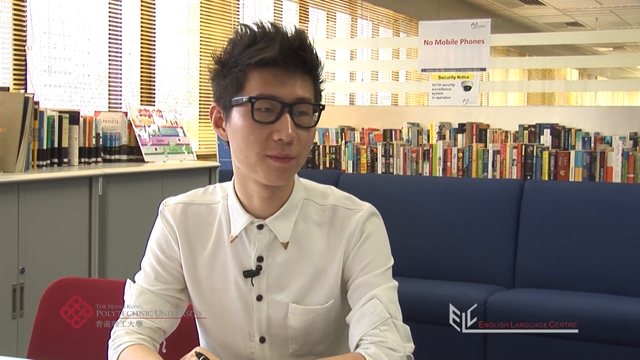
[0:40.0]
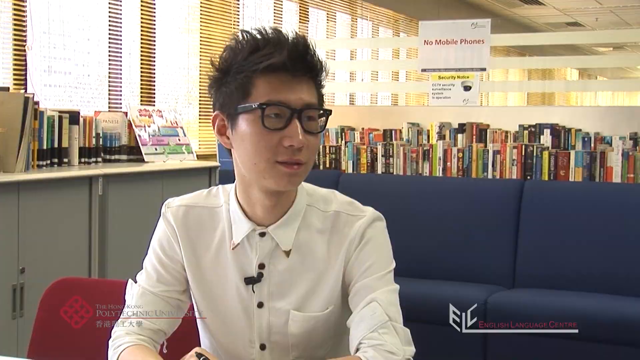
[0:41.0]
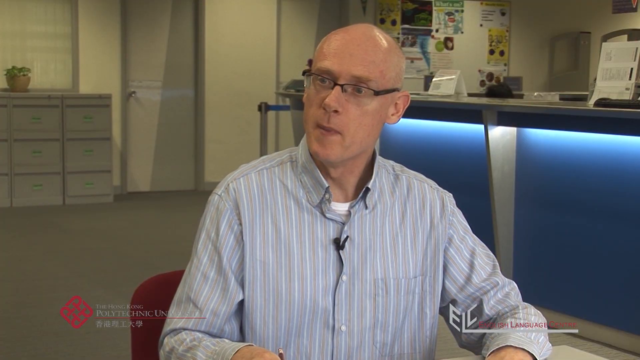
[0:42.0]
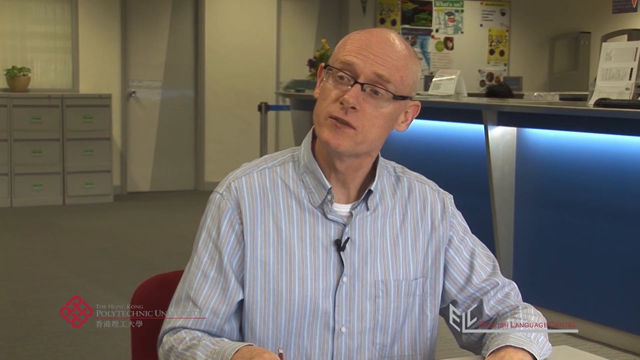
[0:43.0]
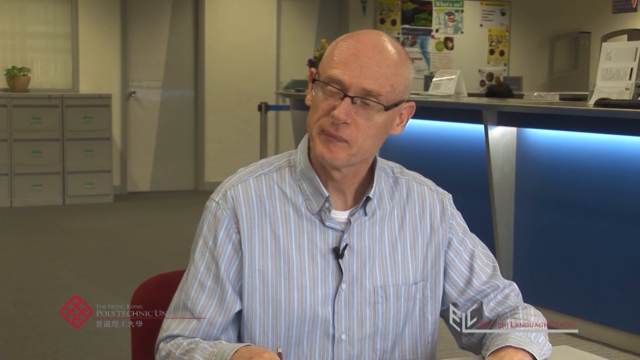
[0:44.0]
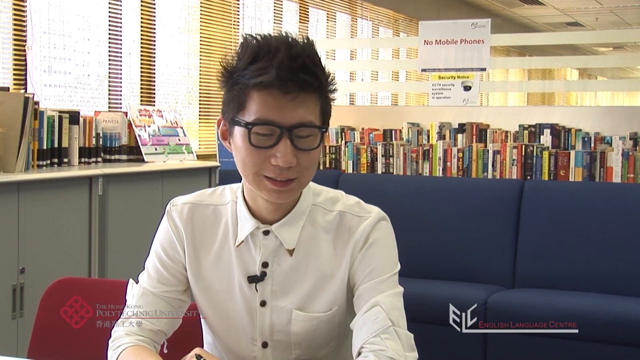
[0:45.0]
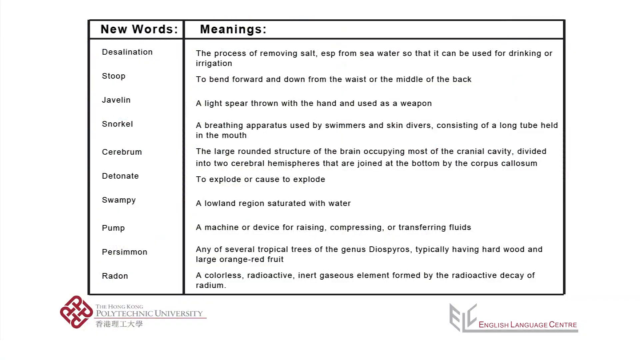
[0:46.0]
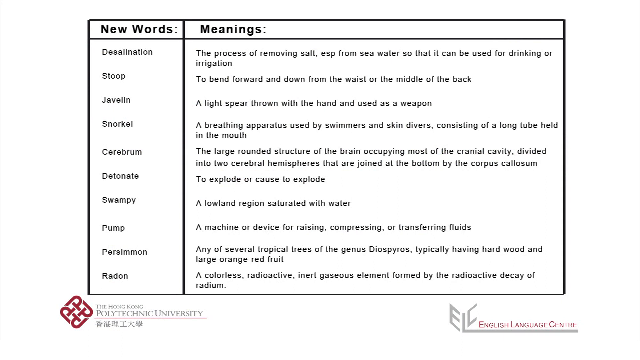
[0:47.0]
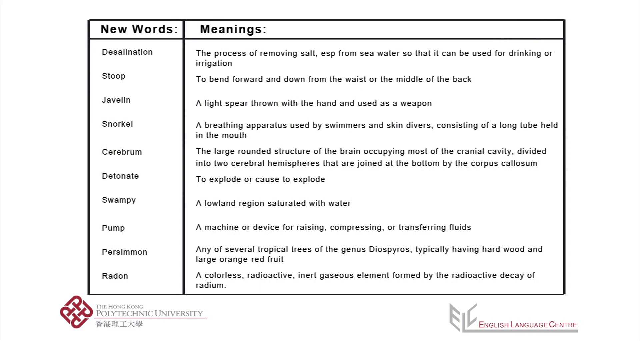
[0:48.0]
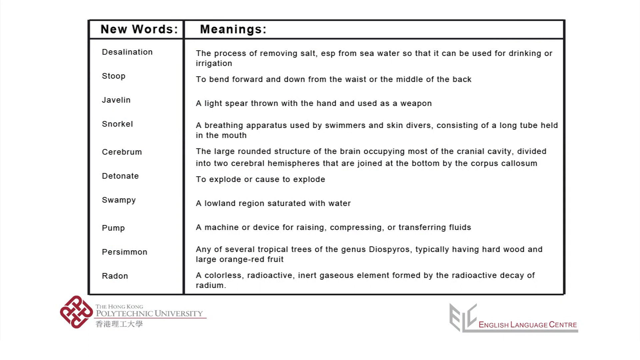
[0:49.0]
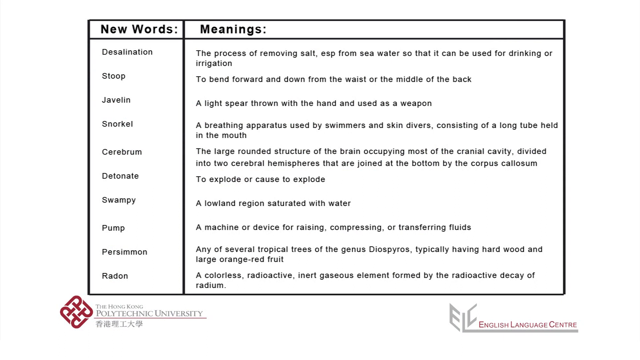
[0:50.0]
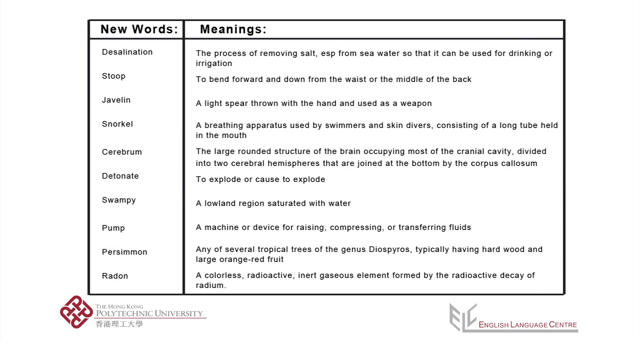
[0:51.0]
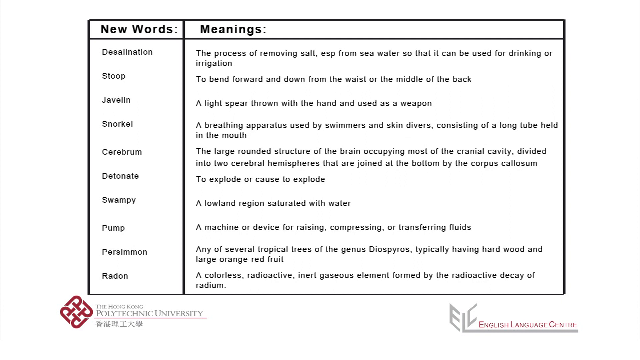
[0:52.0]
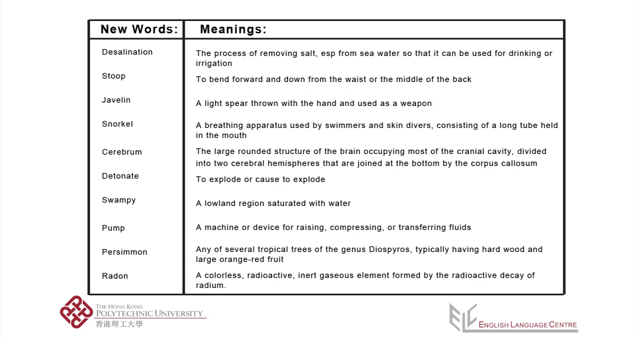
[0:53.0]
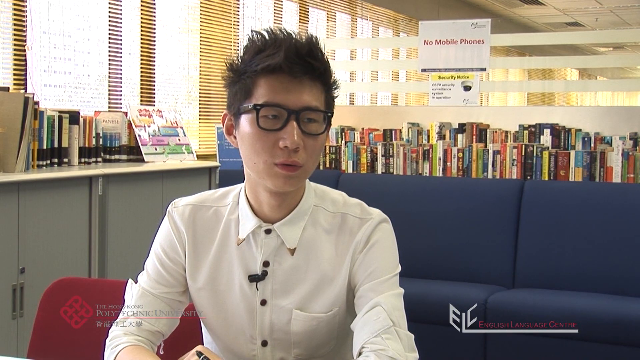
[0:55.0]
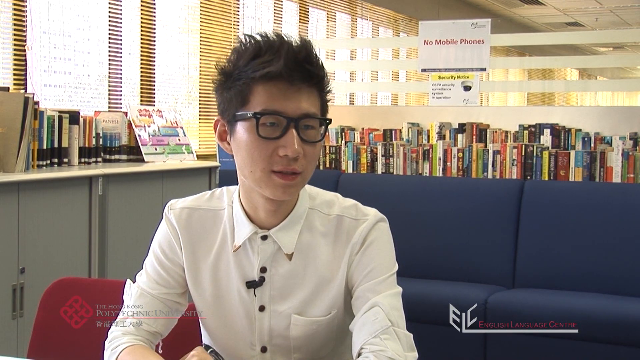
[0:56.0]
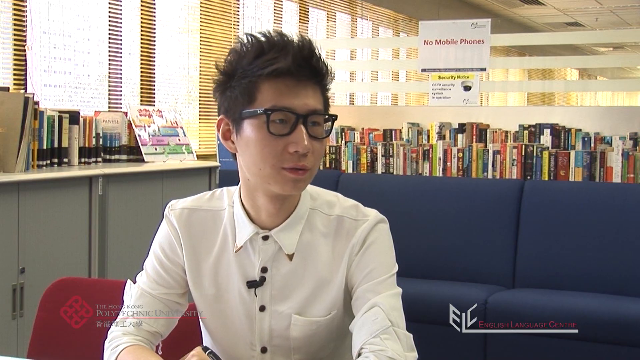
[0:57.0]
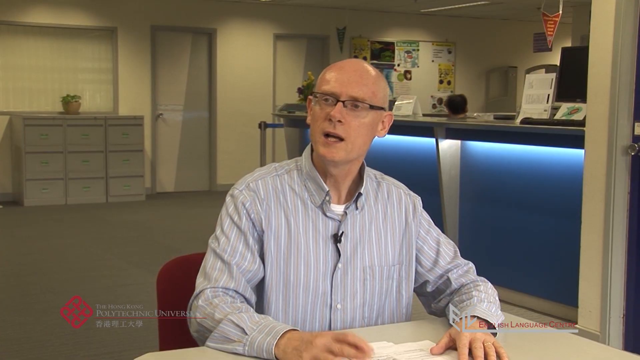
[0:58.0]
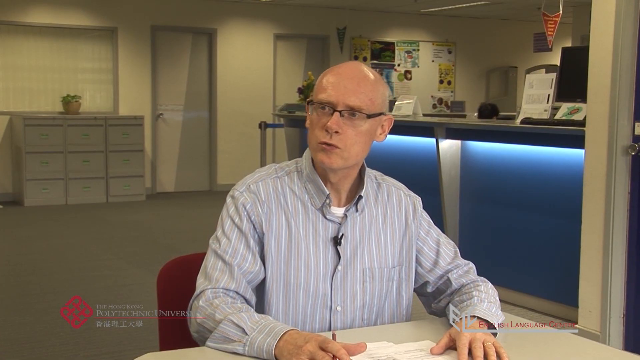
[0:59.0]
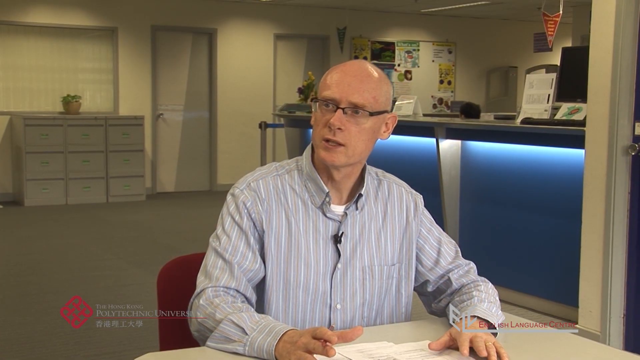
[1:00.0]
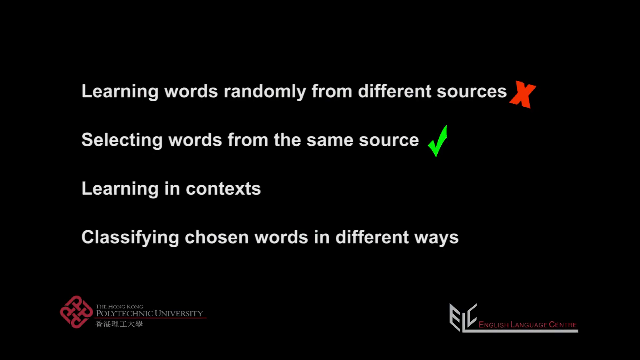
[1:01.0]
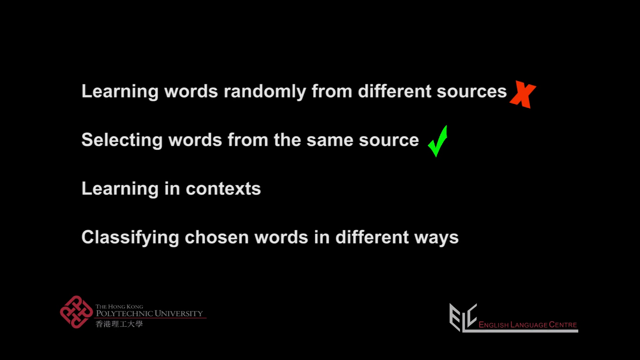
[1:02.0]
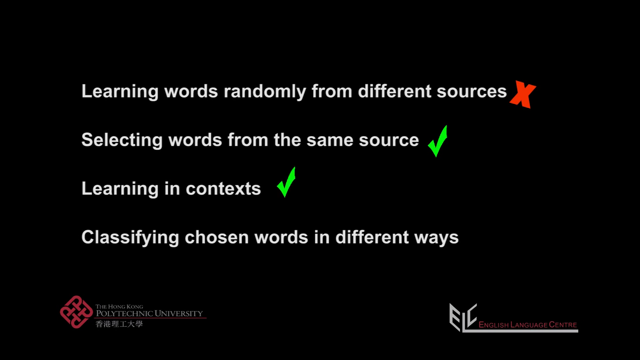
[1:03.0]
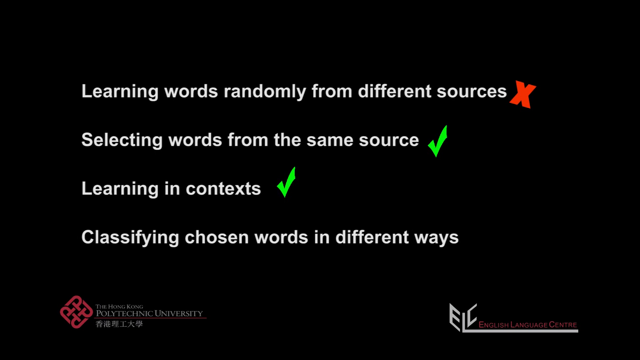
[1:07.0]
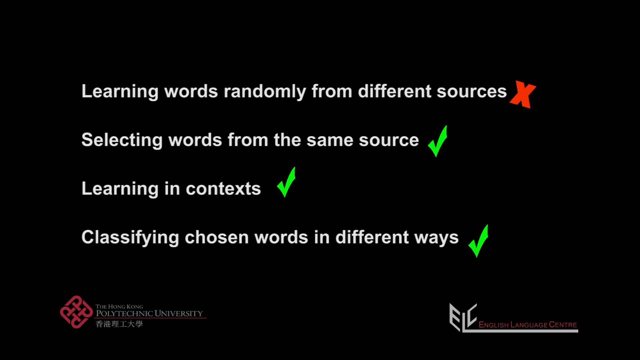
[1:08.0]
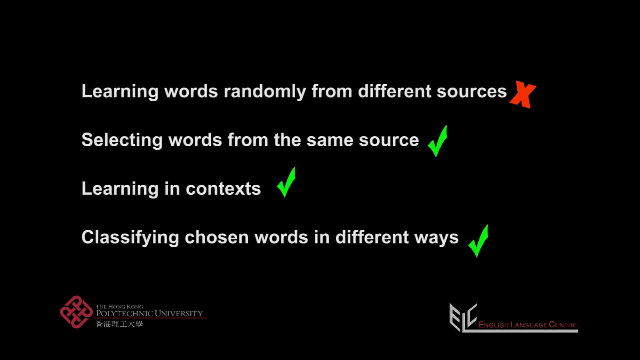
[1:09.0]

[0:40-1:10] On the left is the text "the Hong Kong Polytechnic University" with a logo in the lower left. On the right are three words, the first two being "English Language" and the third starting with C, along with a logo. A male with a long-sleeved shirt pulled up to his elbows and glasses is talking. The shot switches to the older professor, who is bald, wears glasses, and has a blue and white shirt with vertical stripes. The two are having a conversation. Behind the professor are a countertop on the right and filing cabinets on the left. The professor and the student are each sitting in a red chair.